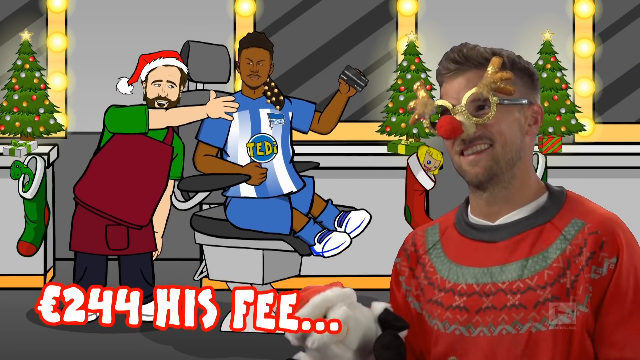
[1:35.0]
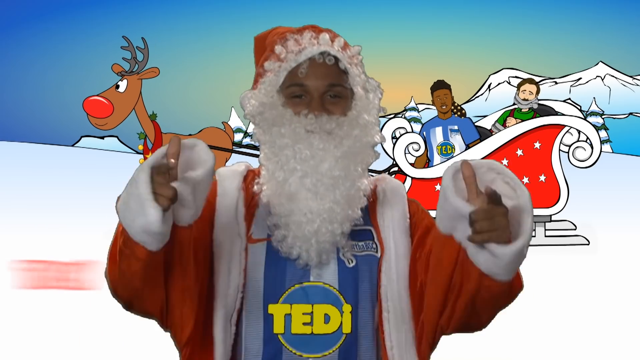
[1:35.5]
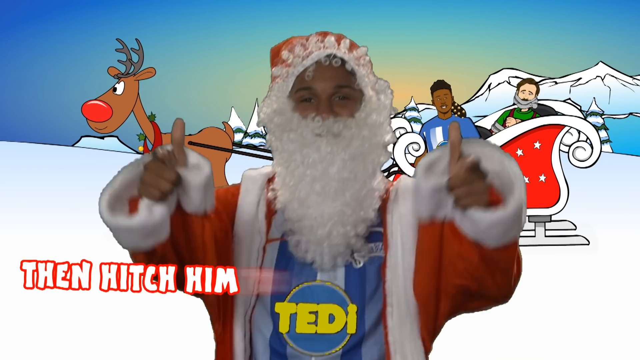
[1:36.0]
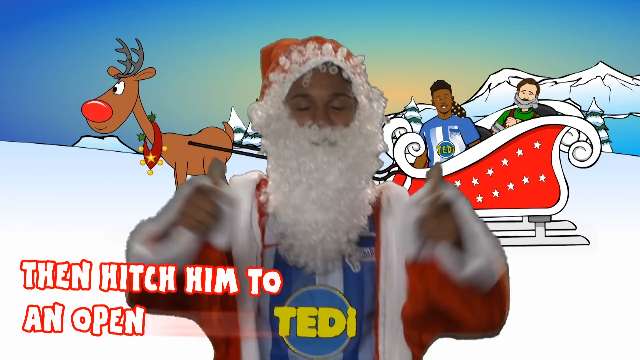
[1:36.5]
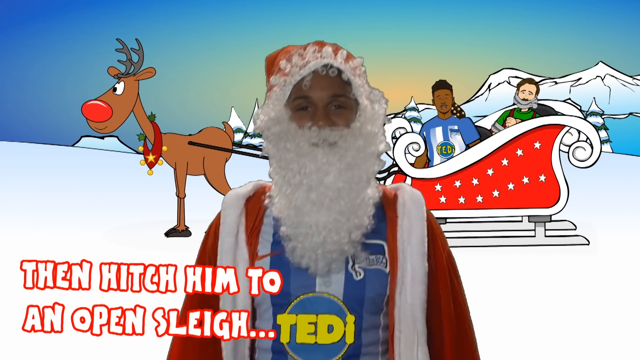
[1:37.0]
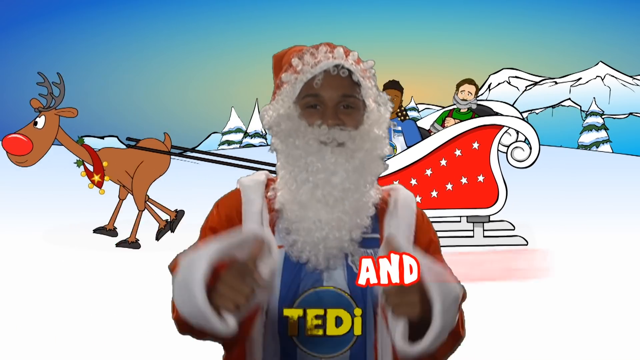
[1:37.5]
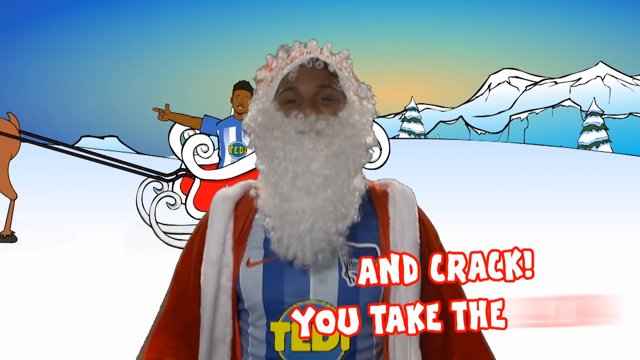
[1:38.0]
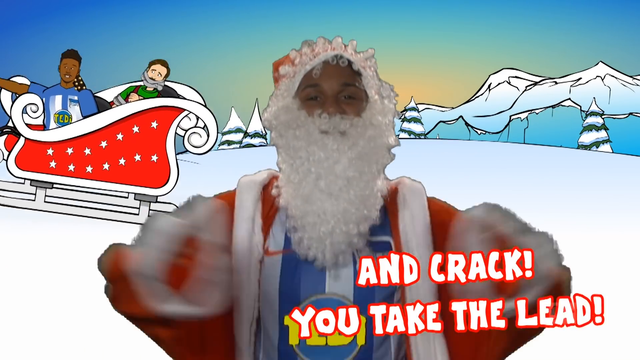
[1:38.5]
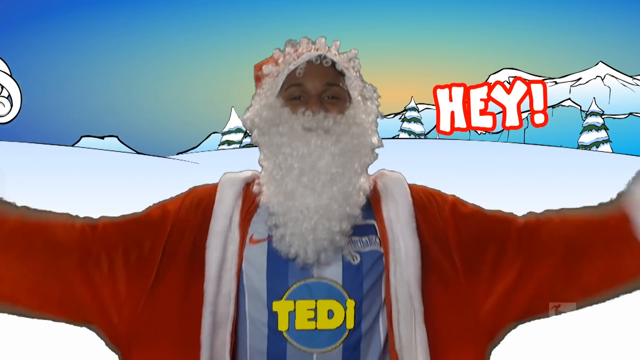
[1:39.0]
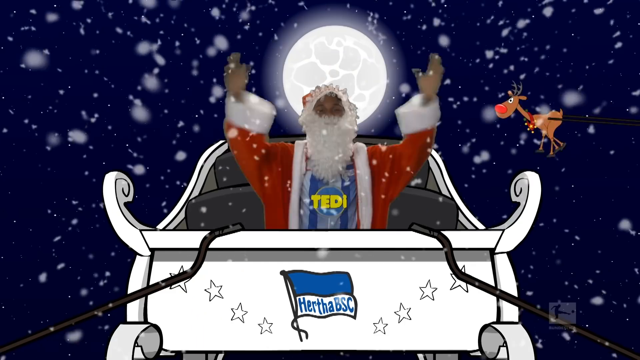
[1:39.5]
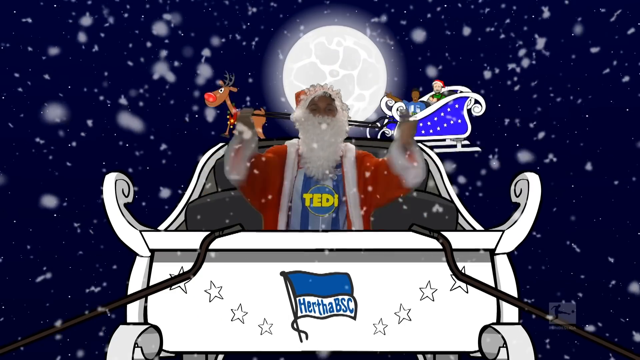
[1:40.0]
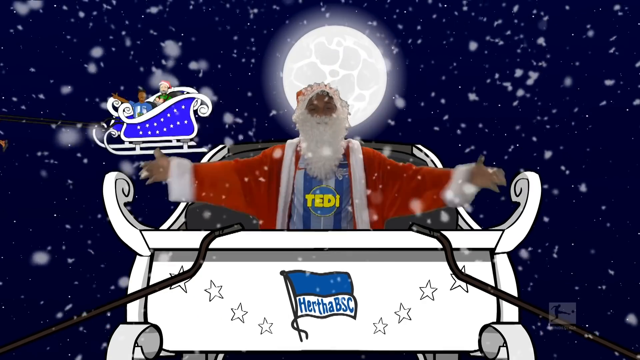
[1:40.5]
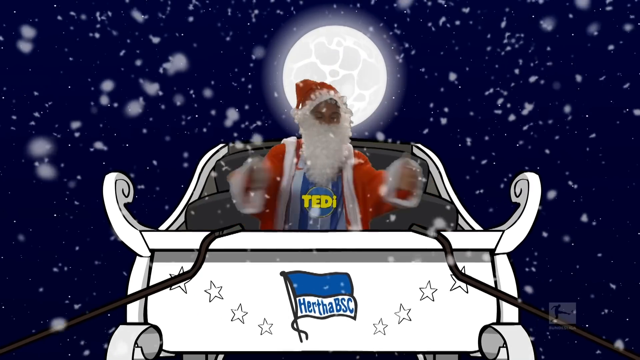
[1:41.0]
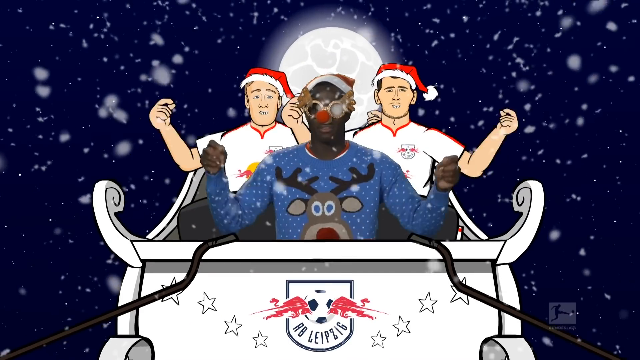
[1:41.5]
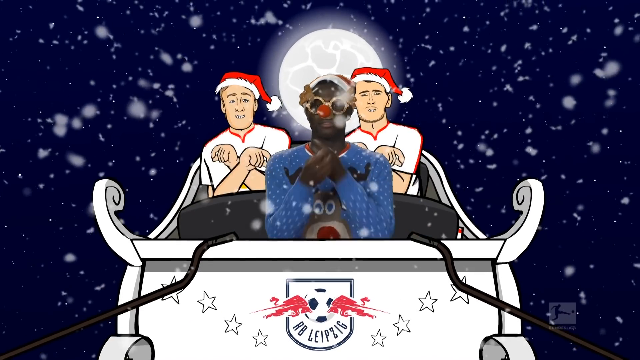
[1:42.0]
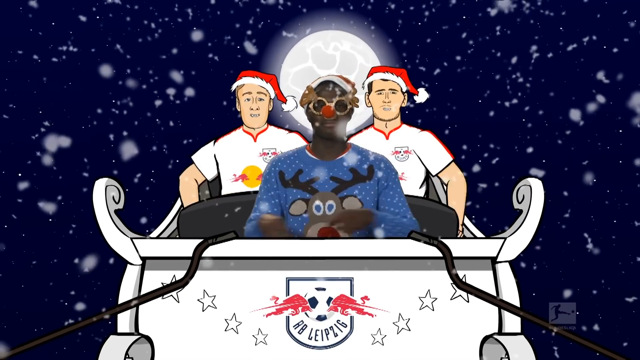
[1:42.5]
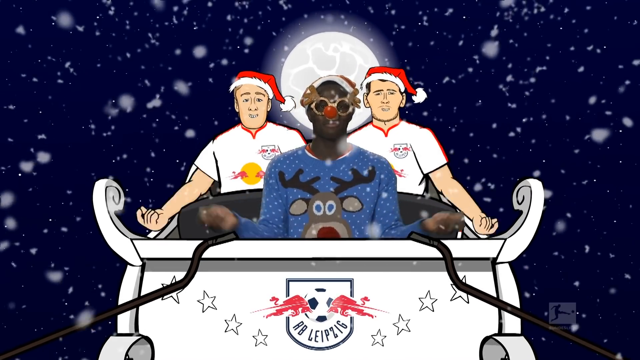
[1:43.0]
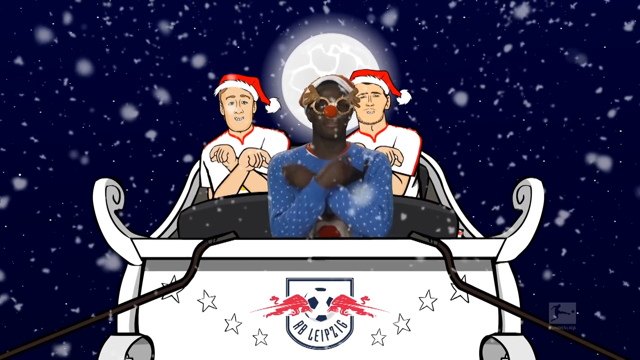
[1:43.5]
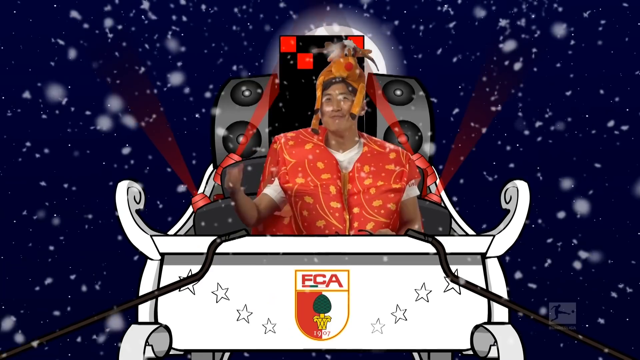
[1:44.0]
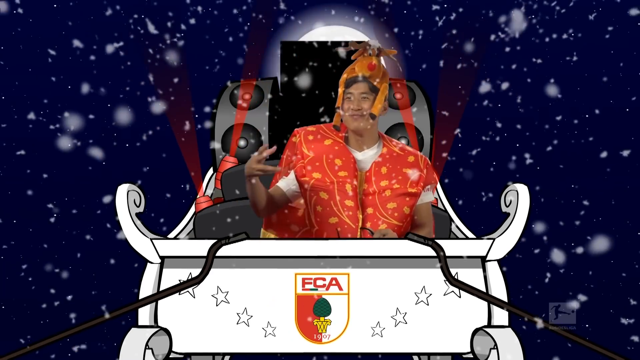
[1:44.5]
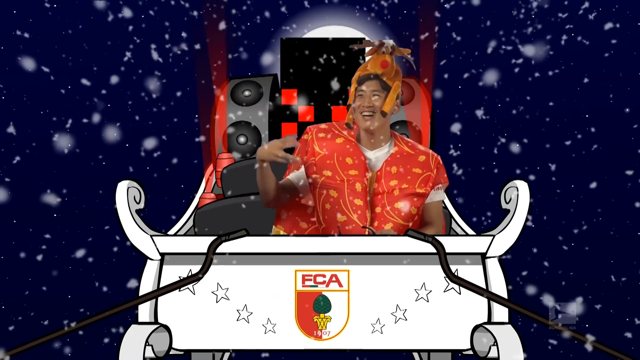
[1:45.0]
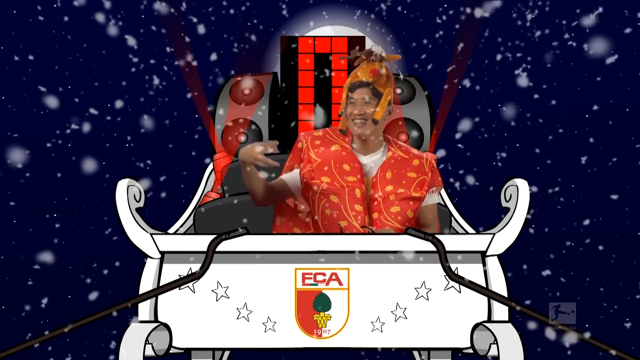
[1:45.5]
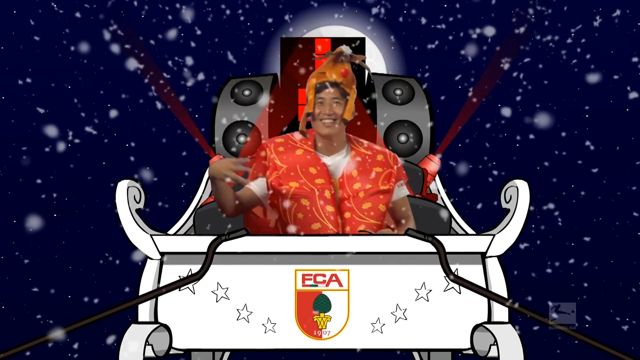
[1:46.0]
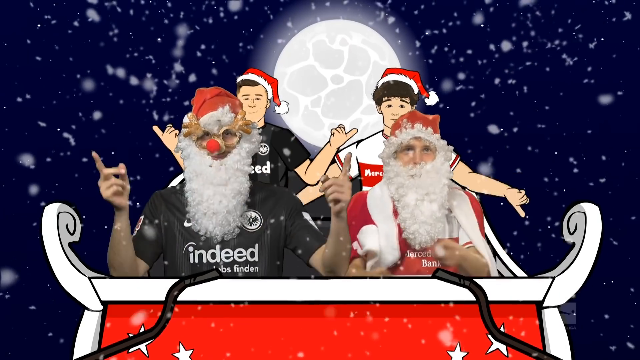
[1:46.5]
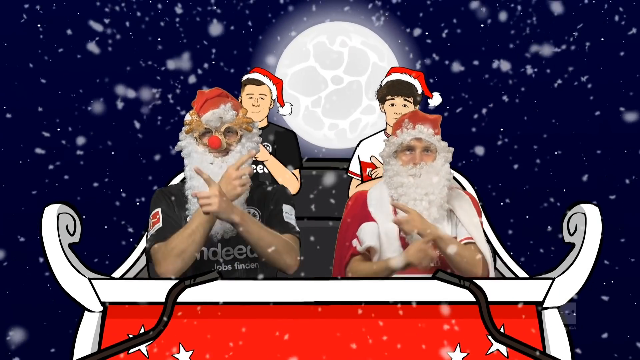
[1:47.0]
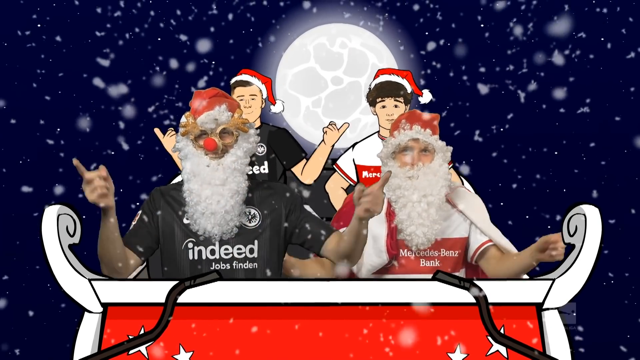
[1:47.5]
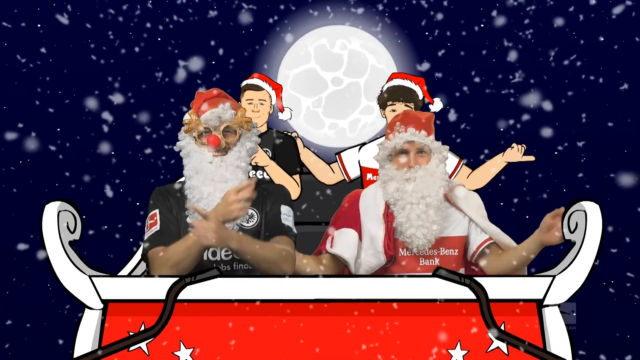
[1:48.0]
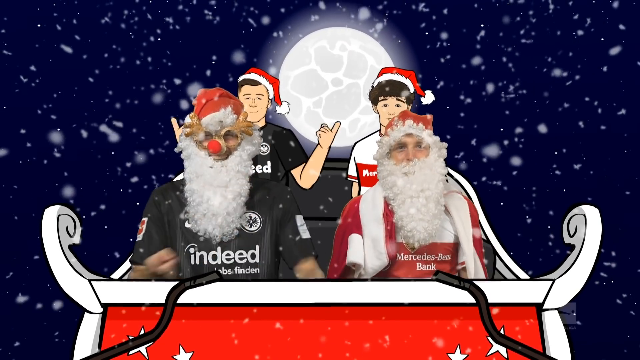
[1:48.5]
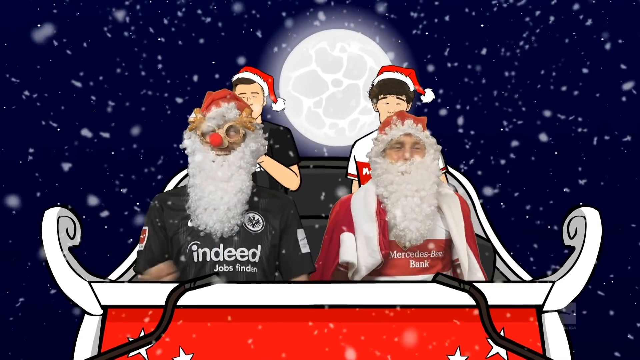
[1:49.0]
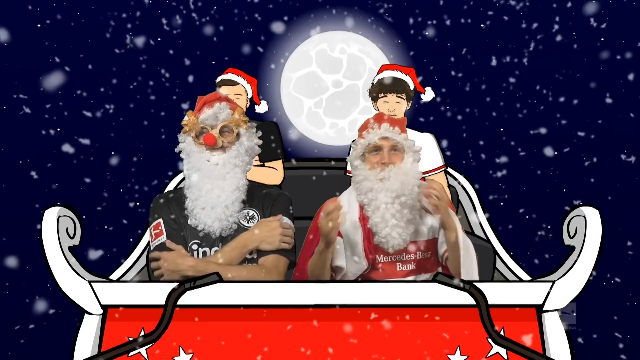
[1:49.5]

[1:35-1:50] The singing continues with the words "And crack, you take the lead. Hey." In the boombox sled they all dance and sing. The barbershop appears briefly, then the words "Then hitch him to an open sleigh, and crack, you take the lead. Hey." A man is in a white sled, another man in a white sled has two sports players behind him, then the man with the beatbox behind him, and a red sled carries two Santas and two sports players. When "Crack, you take the lead" first appears, an animated sled behind the singer holds a man who is tied up with something like a muffle over his mouth; it is pulled by what looks like Rudolph, with a big red nose and something like a wreath or yoke around its neck. Another player, apparently a sports player, is in front of the bound man in that sled. They fly off, and in the next scene a blue sled flies behind the singer toward the left.